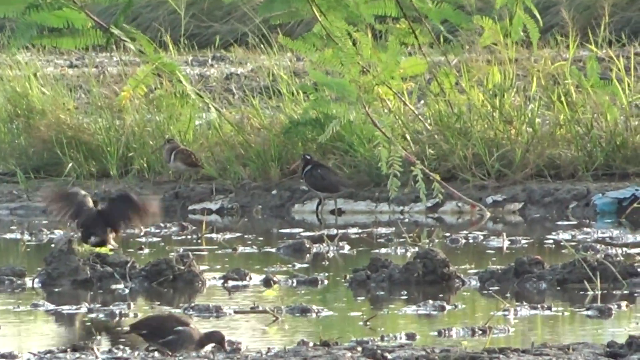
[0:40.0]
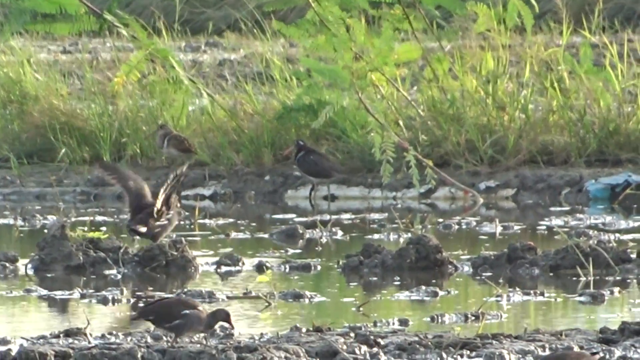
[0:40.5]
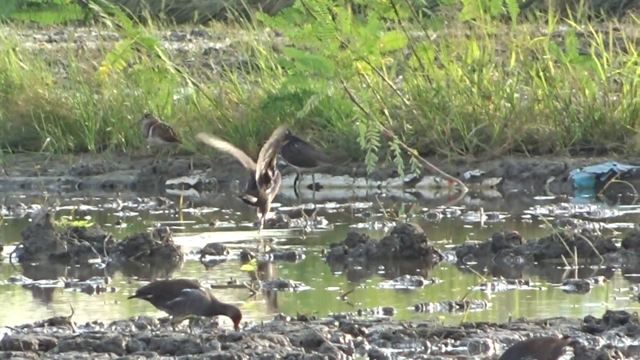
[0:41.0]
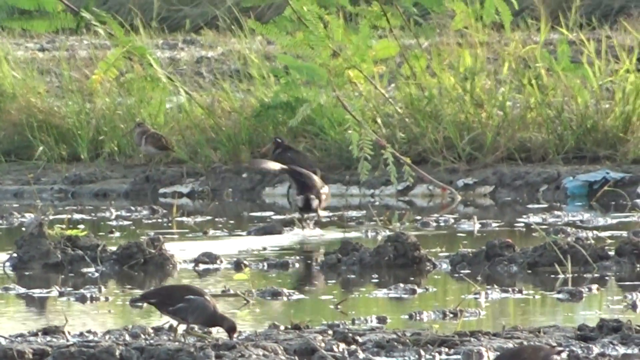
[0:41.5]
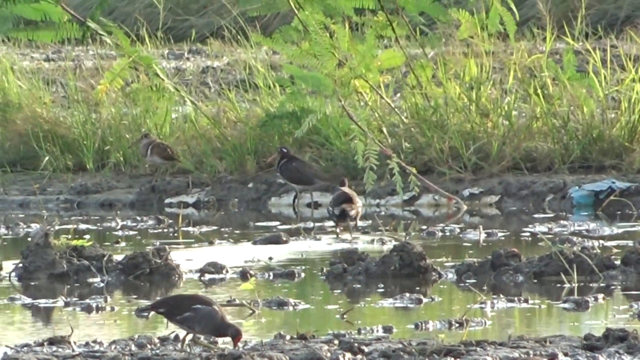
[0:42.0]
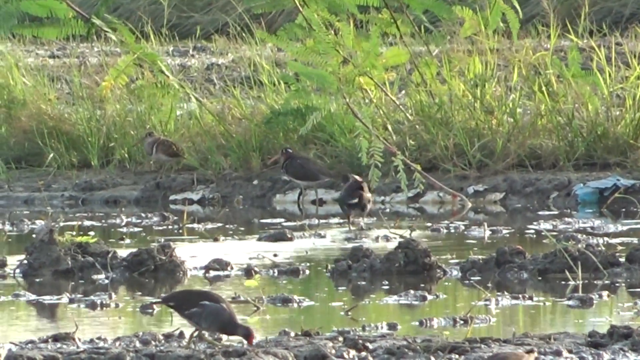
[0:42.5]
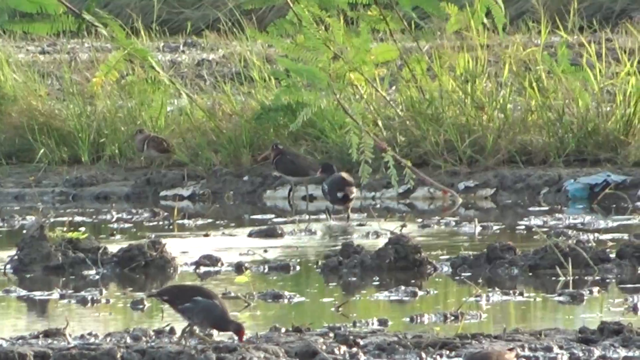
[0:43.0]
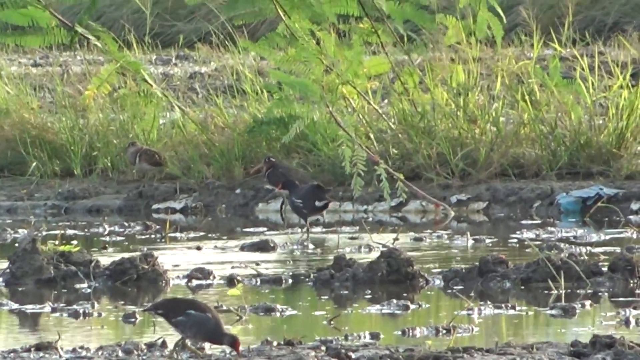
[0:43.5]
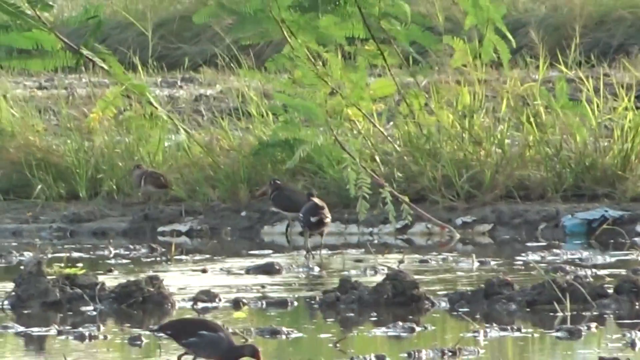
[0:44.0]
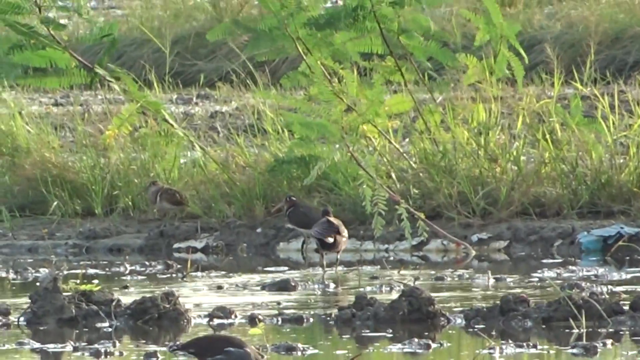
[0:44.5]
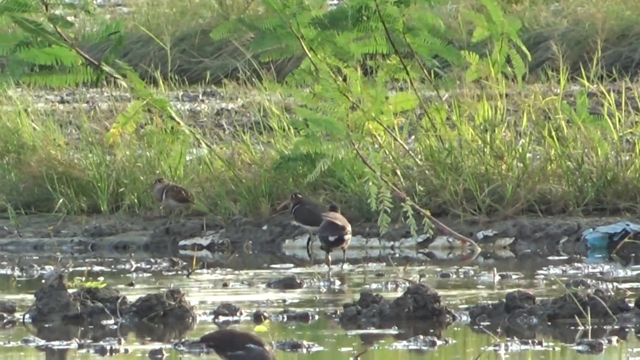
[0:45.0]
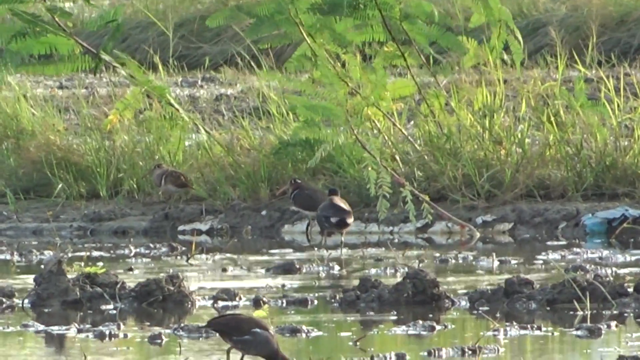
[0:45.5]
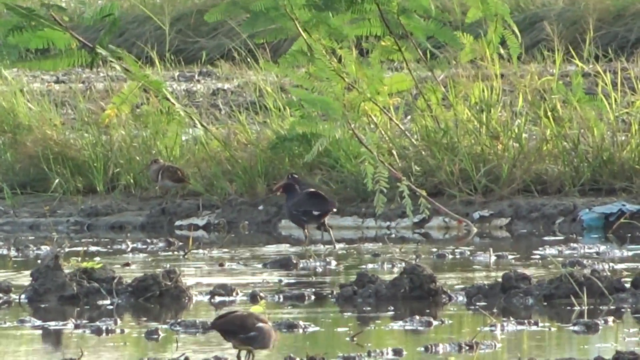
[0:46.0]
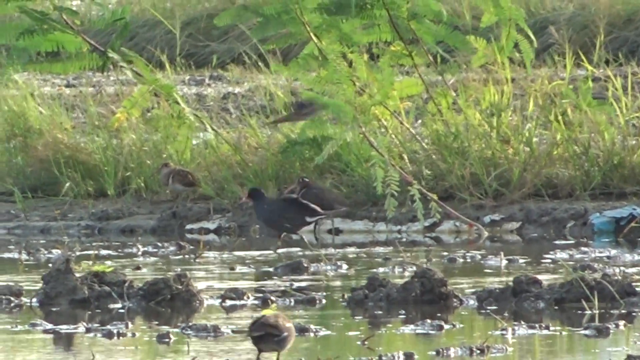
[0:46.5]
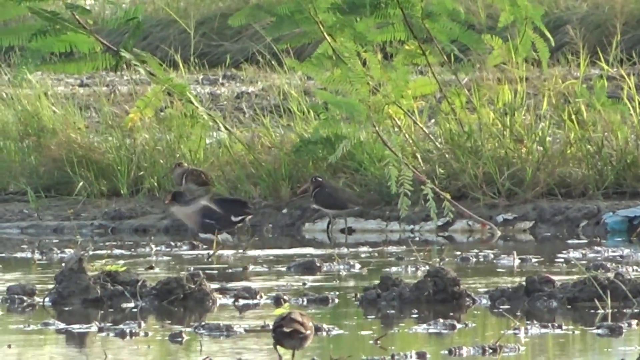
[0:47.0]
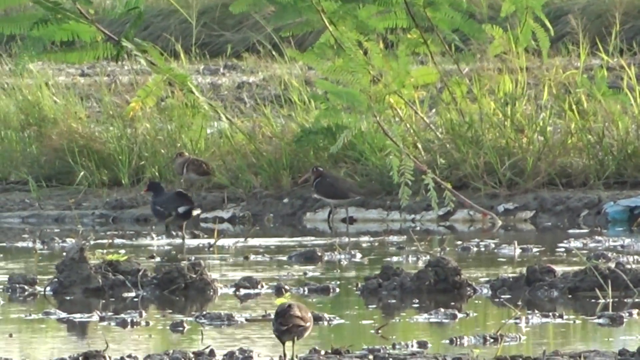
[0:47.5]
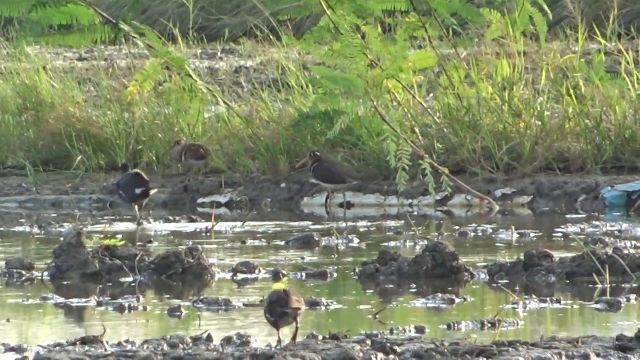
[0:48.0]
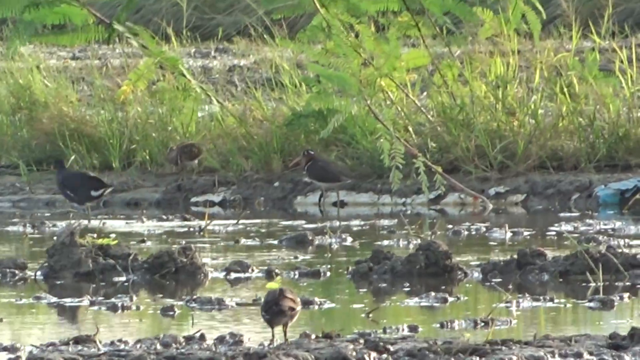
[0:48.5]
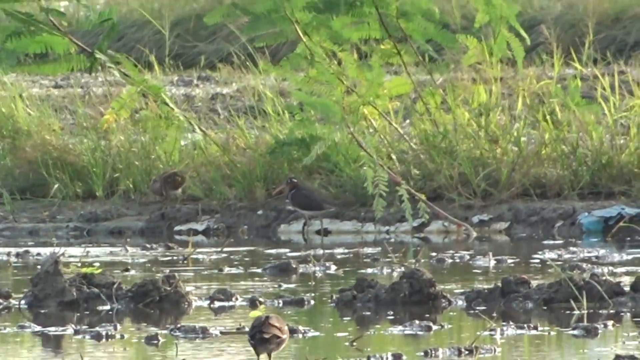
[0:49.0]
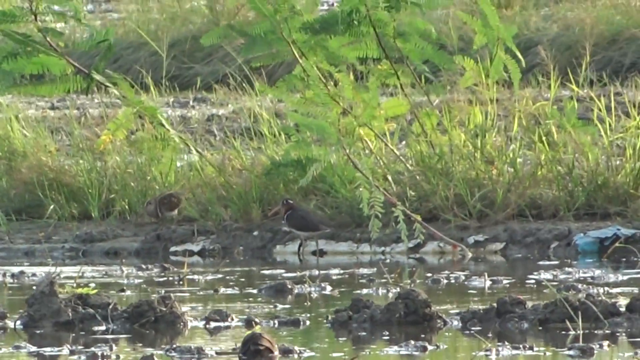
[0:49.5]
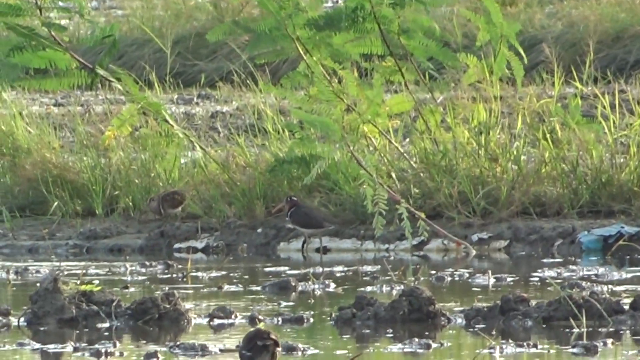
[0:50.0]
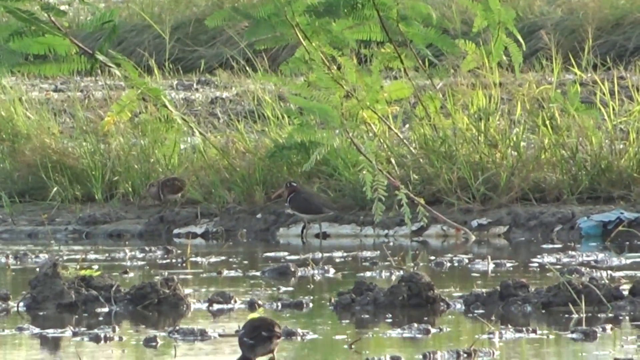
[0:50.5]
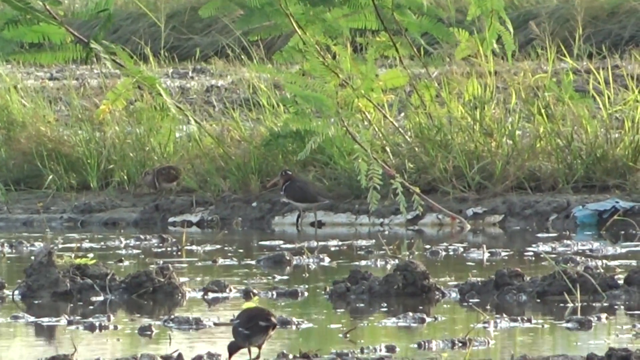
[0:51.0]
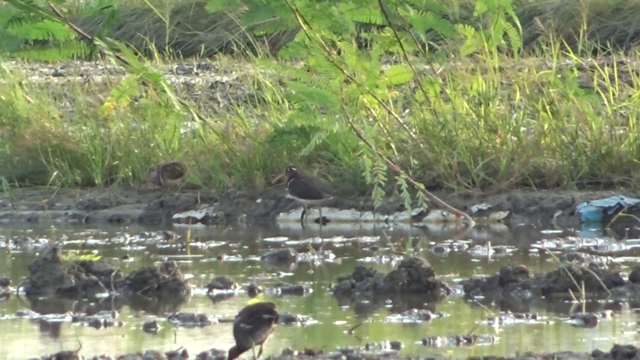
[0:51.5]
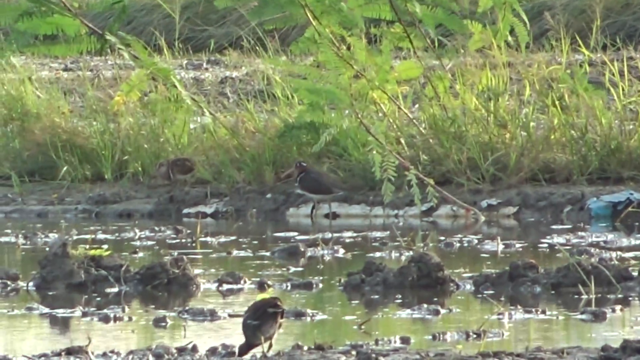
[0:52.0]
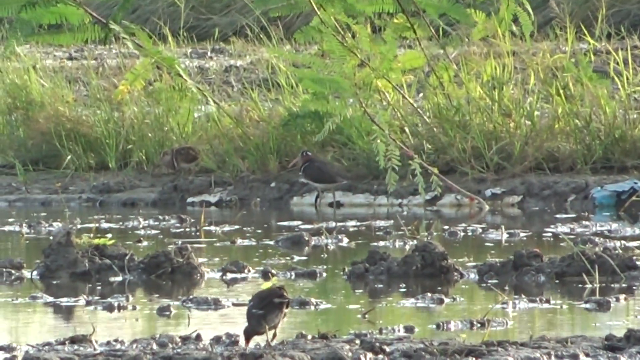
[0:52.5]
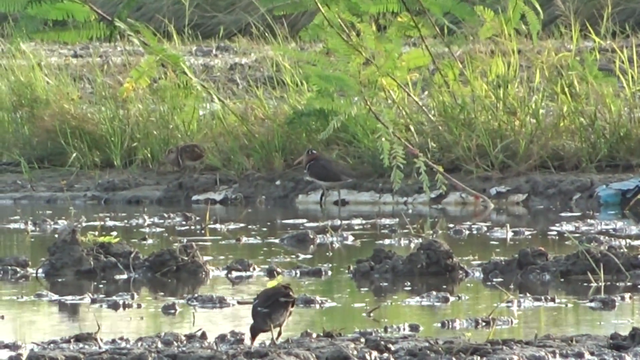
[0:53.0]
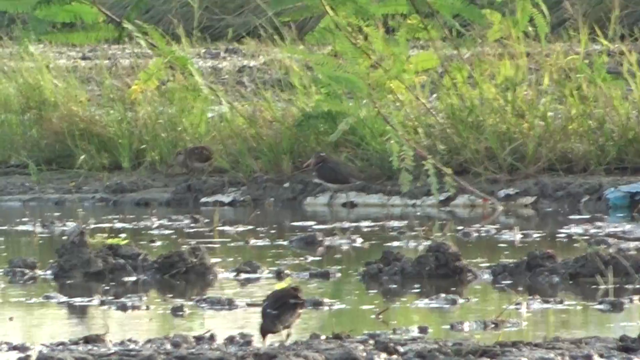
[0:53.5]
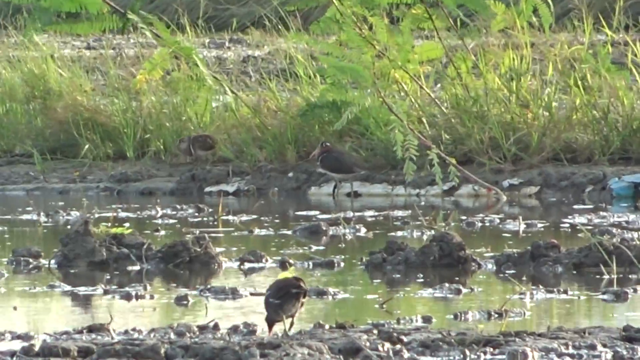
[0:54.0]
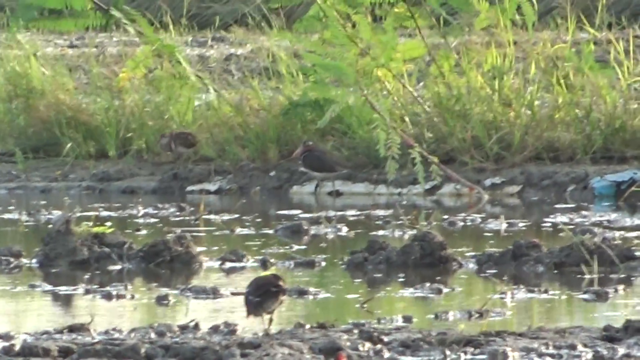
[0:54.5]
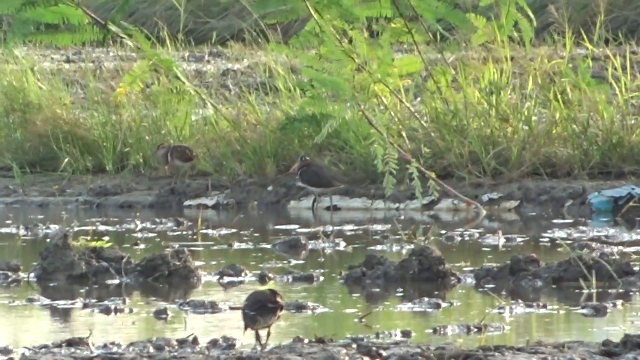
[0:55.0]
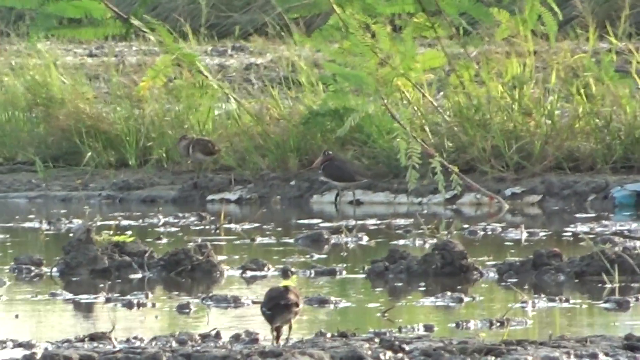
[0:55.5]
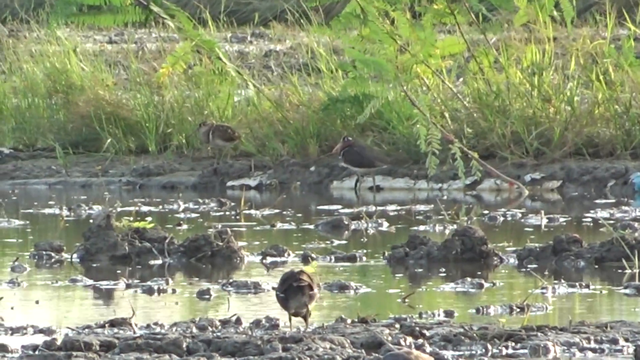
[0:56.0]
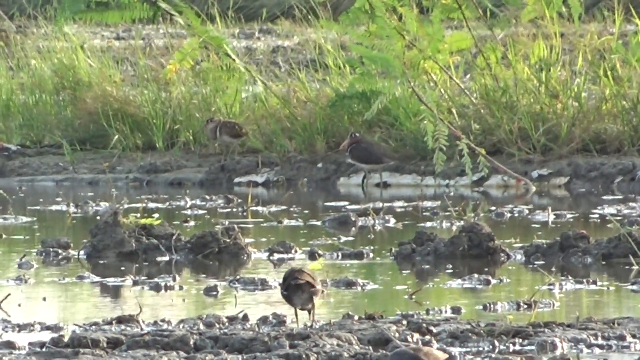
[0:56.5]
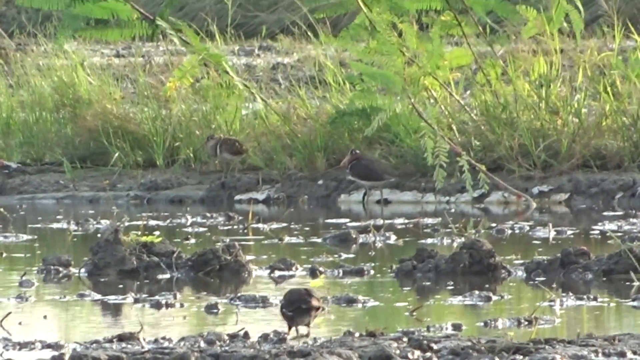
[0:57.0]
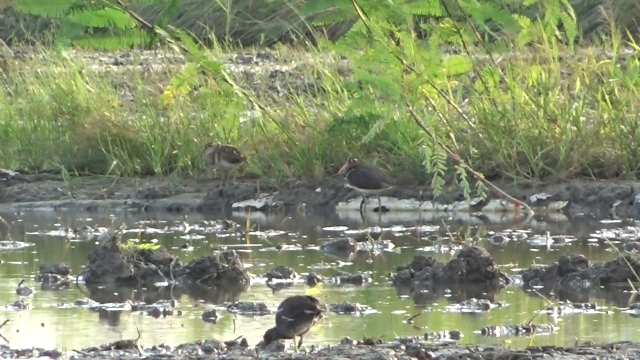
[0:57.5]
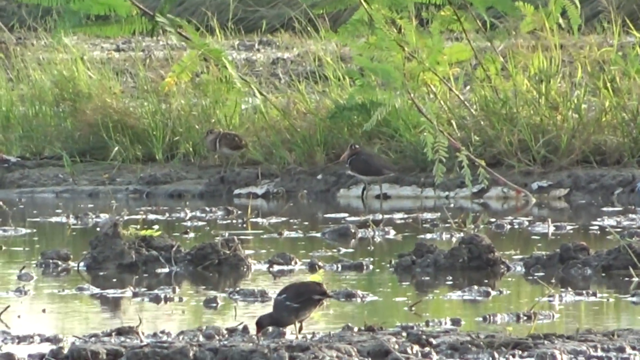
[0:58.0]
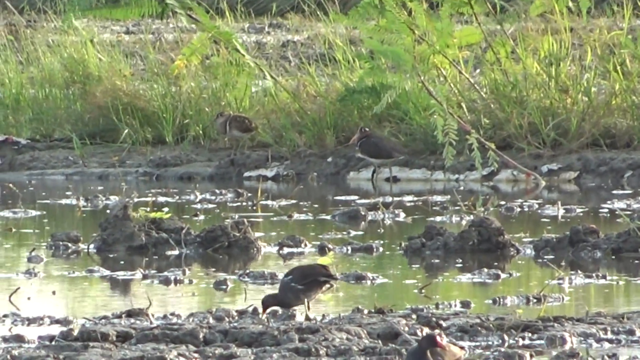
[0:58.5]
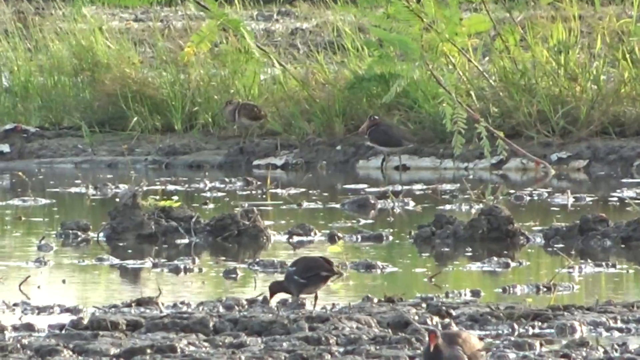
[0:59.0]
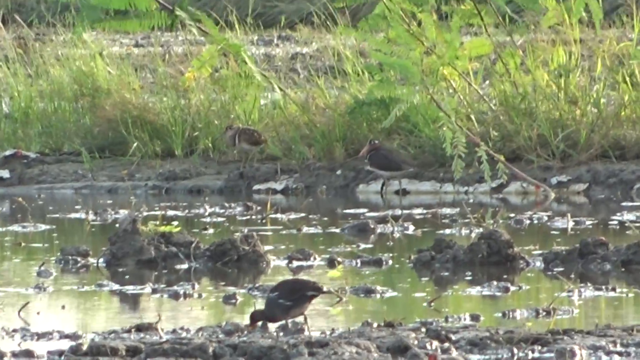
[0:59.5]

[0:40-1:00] Several birds are in a swamp area with lots of green grass, muddy water, some dead grass, and pieces of grass sticking out through the muddy area. Big clumps of mud and dirt are there, and birds stand on them. A bird standing on the muddy dirt clump in the middle flies off and goes straight to the side of the swamp, where another bird is standing. Meanwhile, birds fly by. The bird that flew off the muddy area walks off into the water and out of the frame. One bird pecks down in the muddy water area, eating something, and another pecks down in a different muddy area. Two birds off to the right just stand there, not really doing anything; they have long, thin beaks that look sharp. Little ripples move in the water, and the green grass and shrubbery blow gently in the wind.